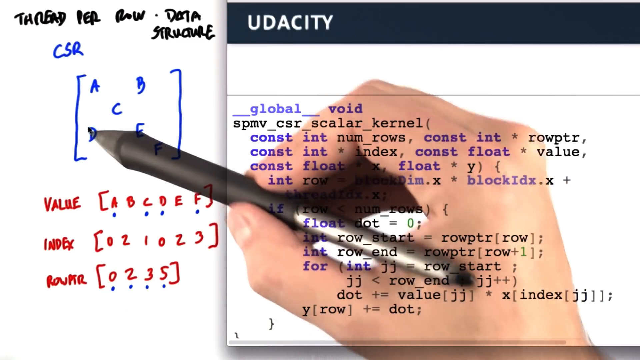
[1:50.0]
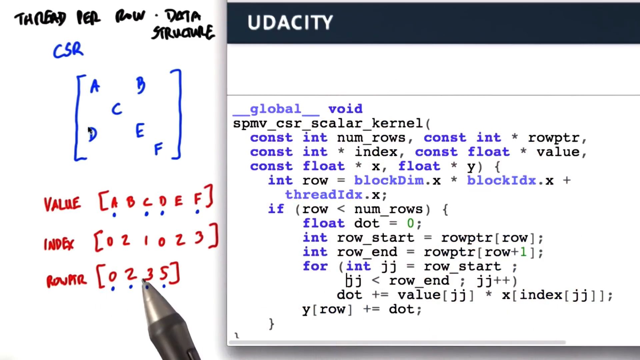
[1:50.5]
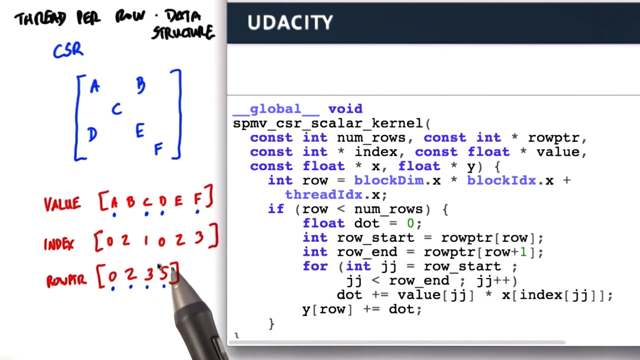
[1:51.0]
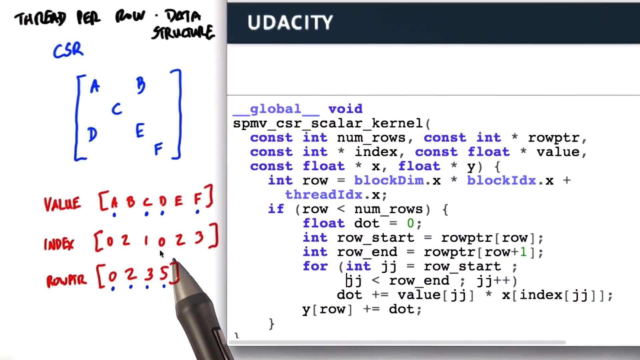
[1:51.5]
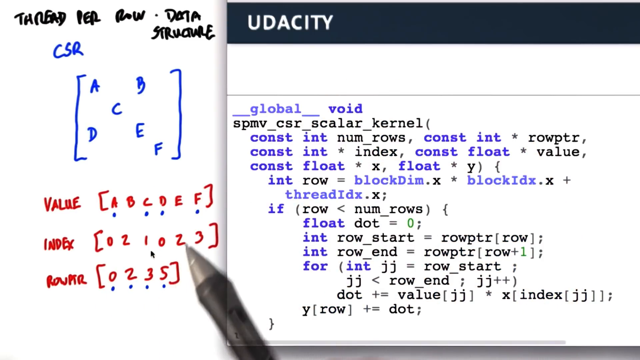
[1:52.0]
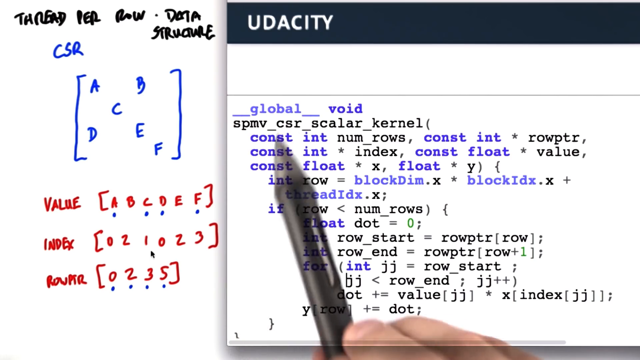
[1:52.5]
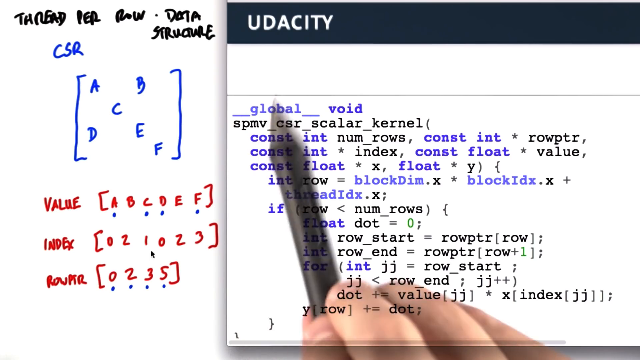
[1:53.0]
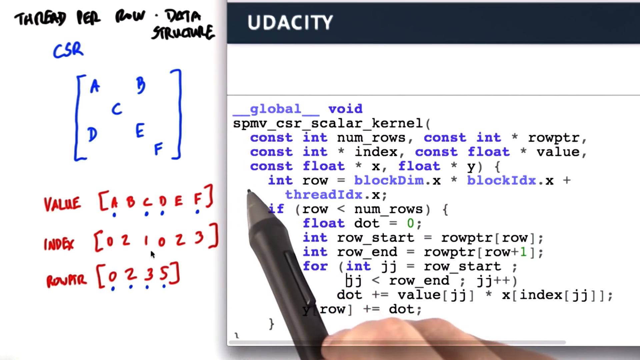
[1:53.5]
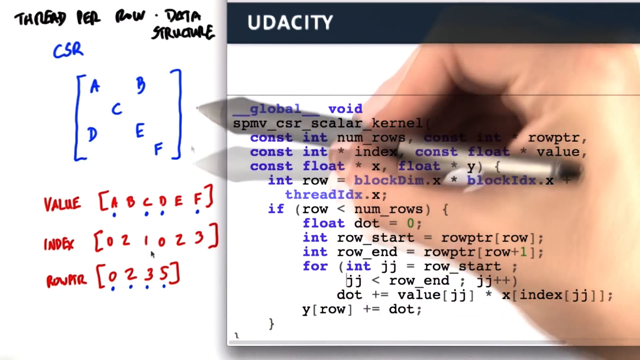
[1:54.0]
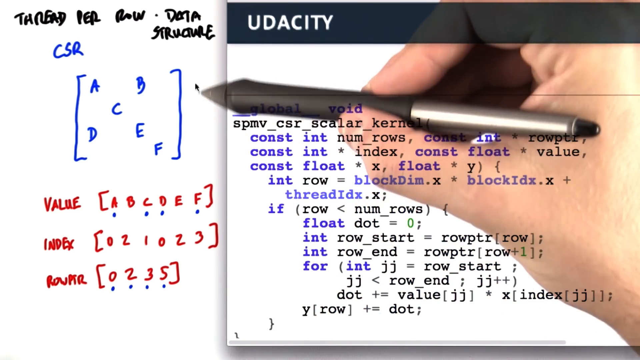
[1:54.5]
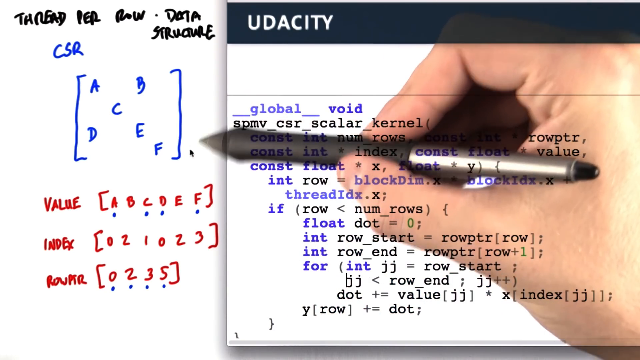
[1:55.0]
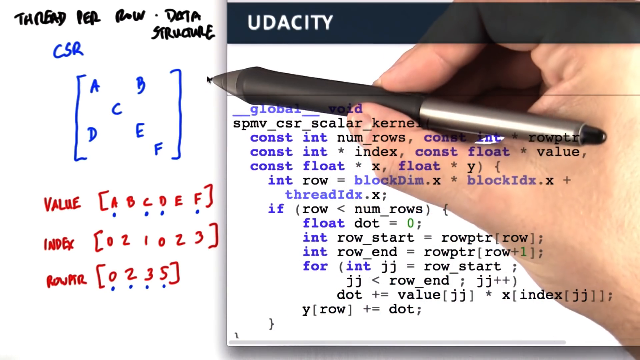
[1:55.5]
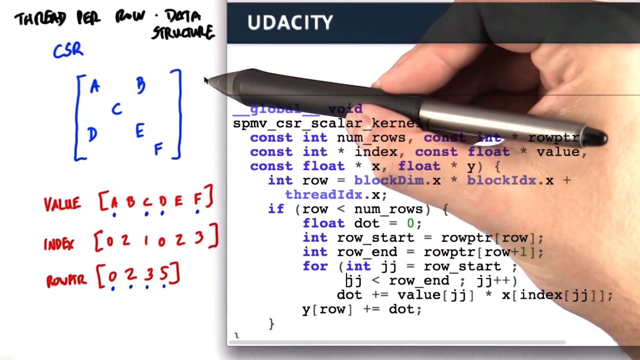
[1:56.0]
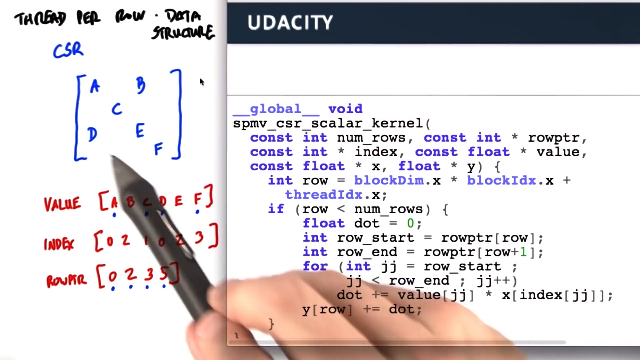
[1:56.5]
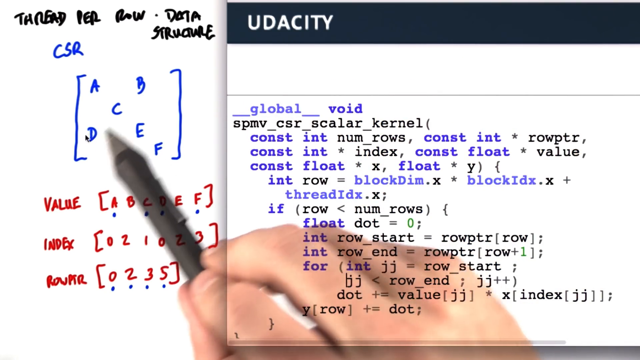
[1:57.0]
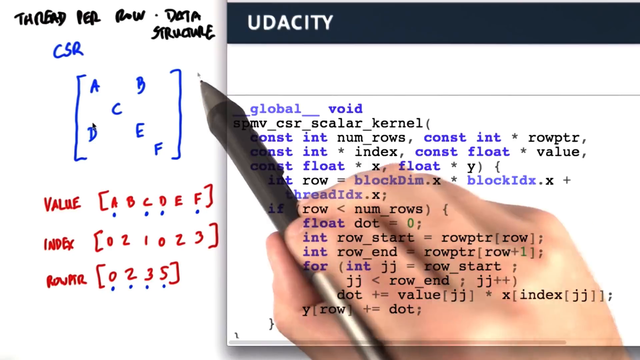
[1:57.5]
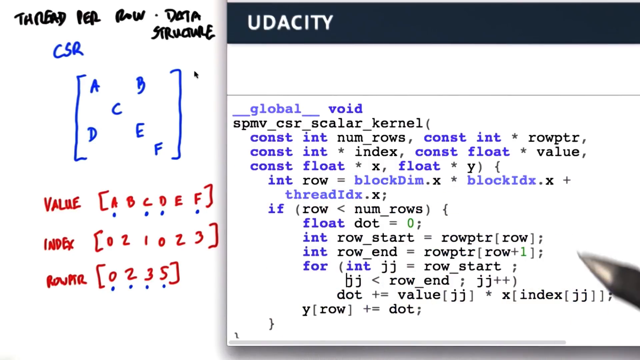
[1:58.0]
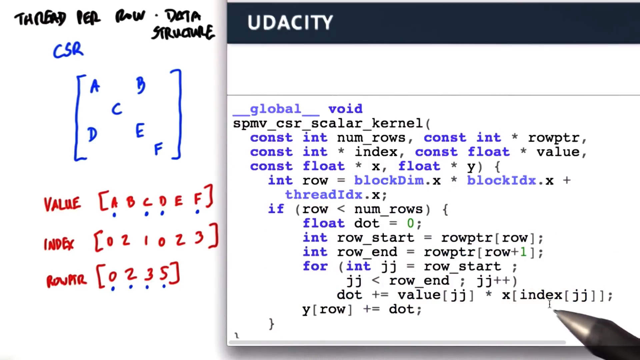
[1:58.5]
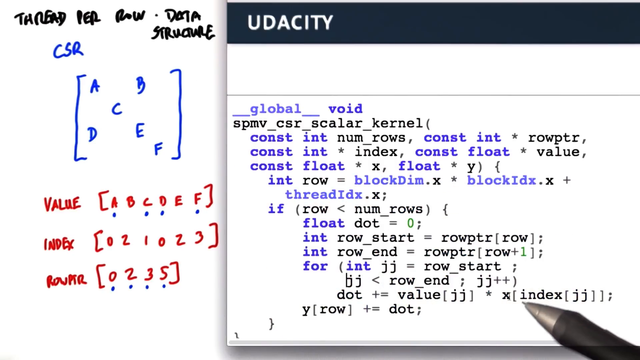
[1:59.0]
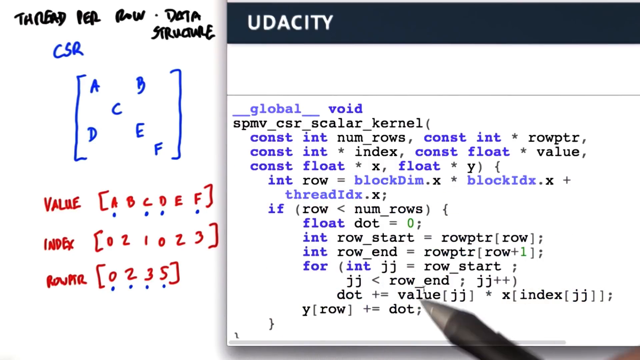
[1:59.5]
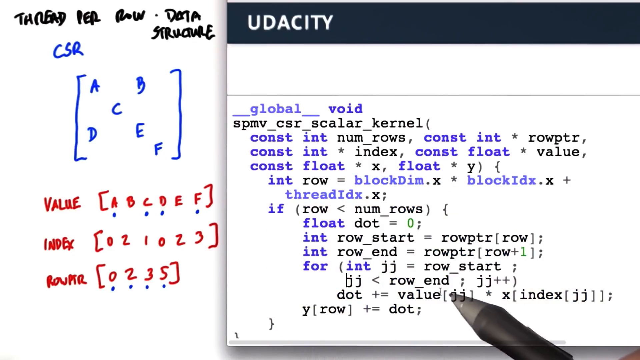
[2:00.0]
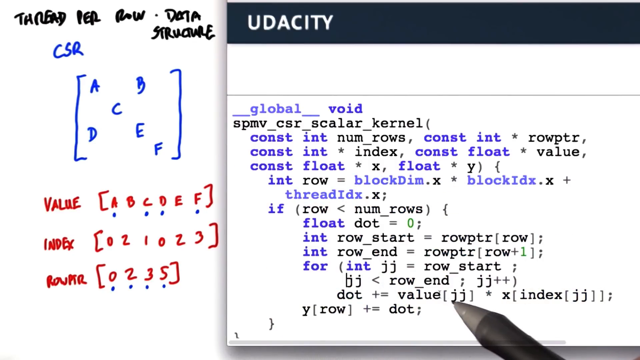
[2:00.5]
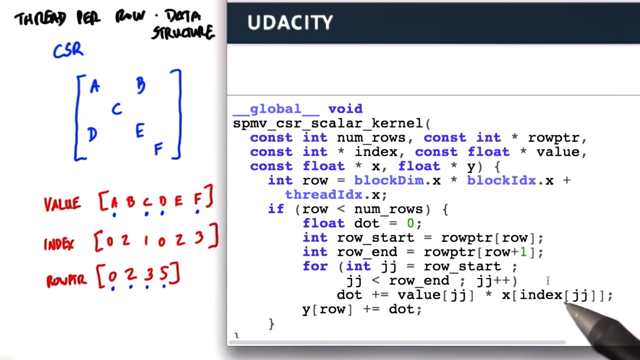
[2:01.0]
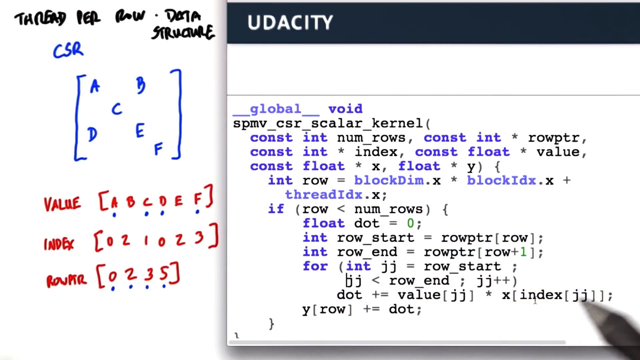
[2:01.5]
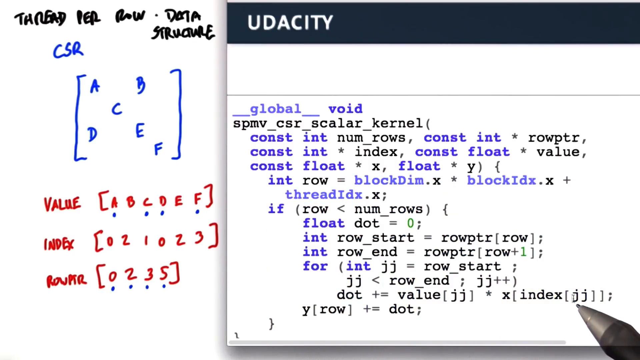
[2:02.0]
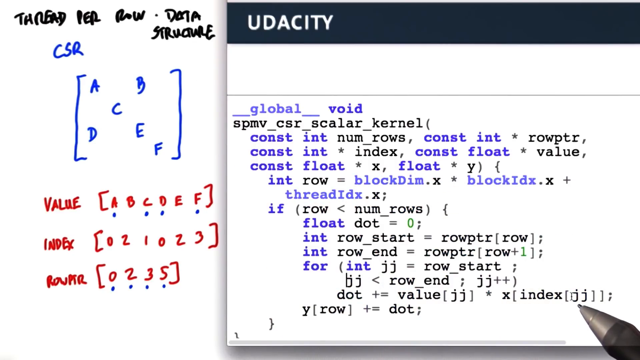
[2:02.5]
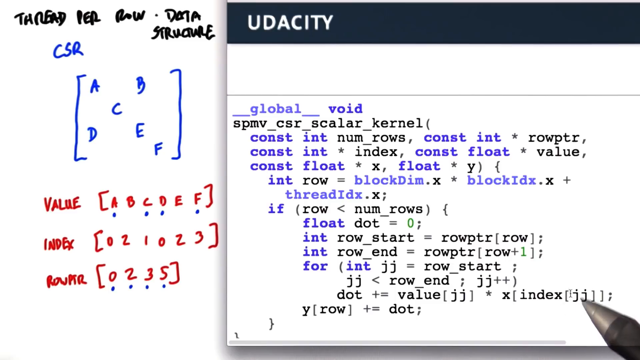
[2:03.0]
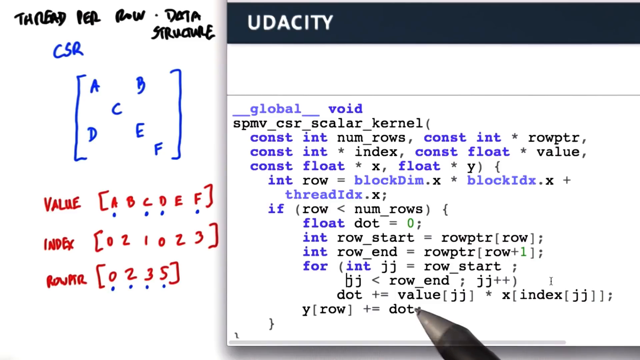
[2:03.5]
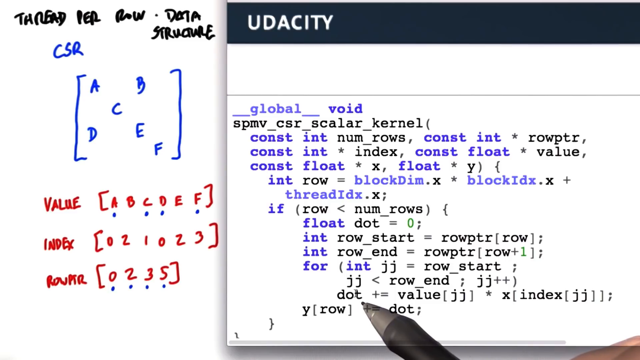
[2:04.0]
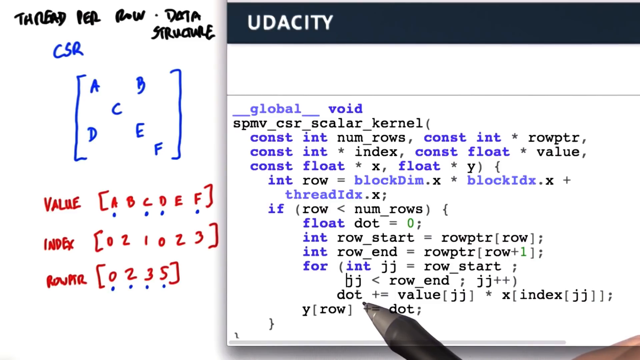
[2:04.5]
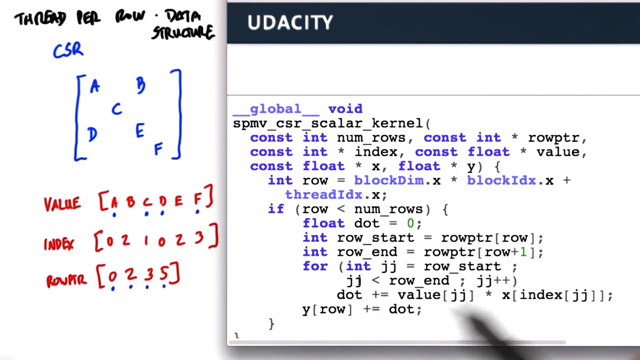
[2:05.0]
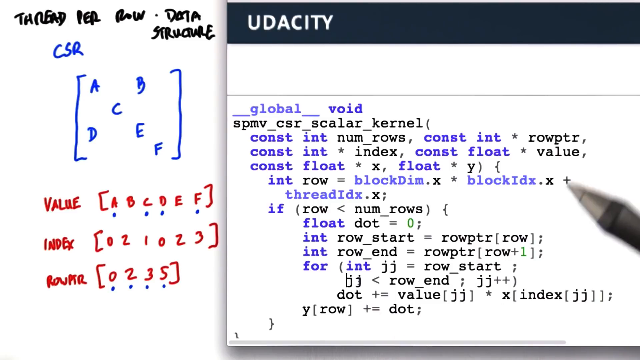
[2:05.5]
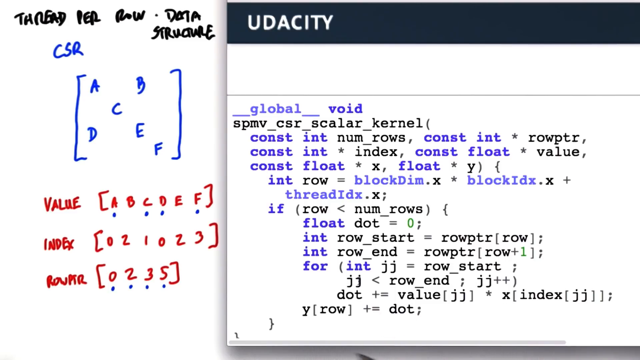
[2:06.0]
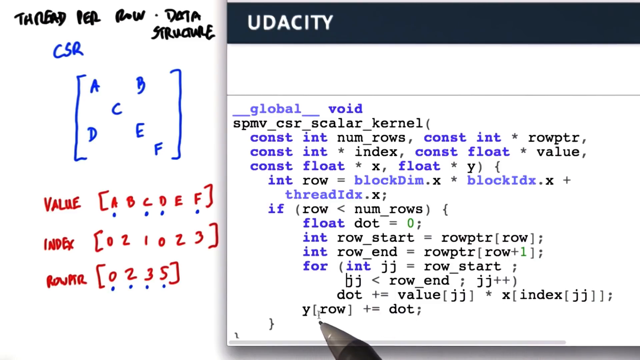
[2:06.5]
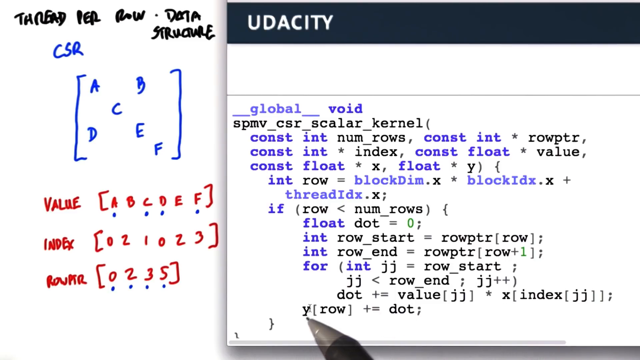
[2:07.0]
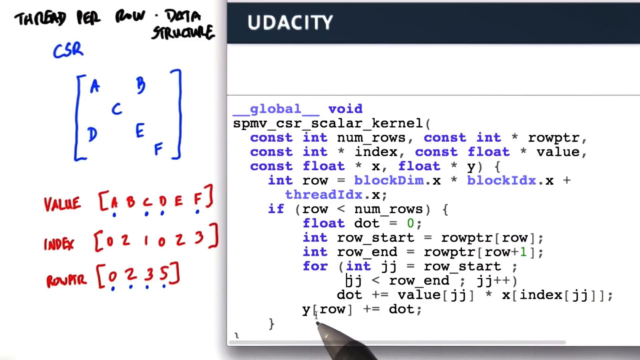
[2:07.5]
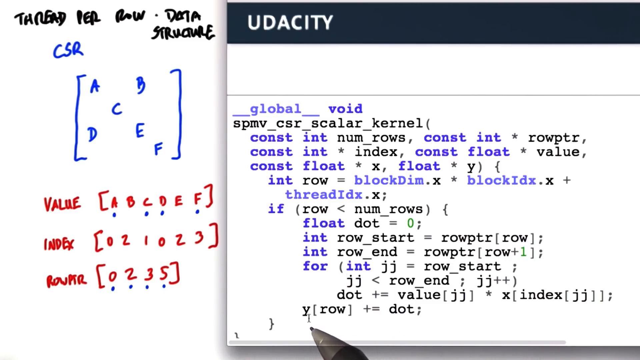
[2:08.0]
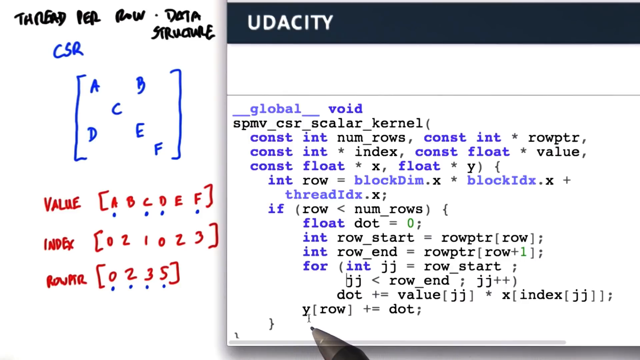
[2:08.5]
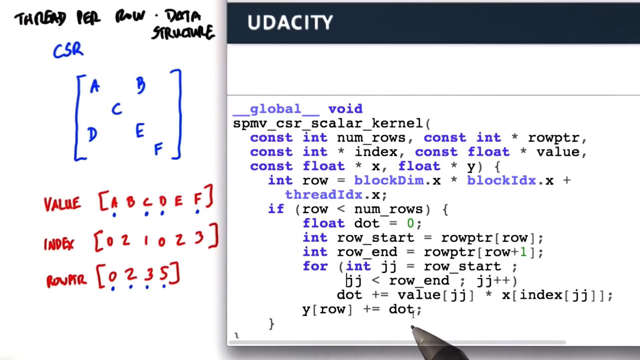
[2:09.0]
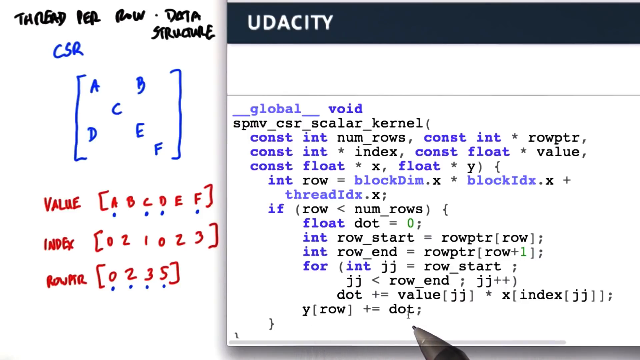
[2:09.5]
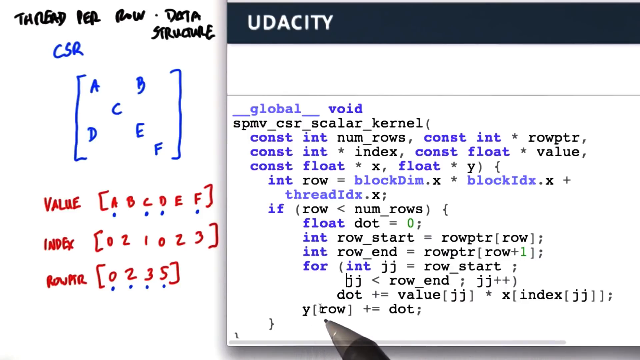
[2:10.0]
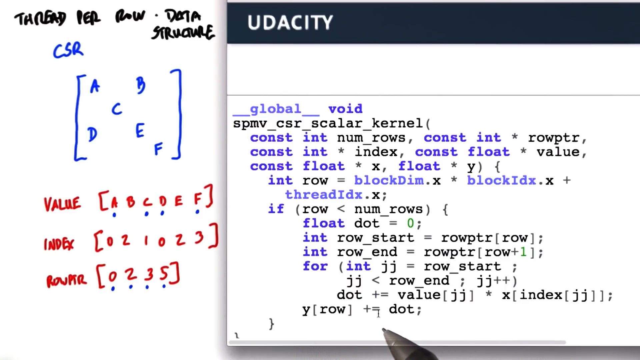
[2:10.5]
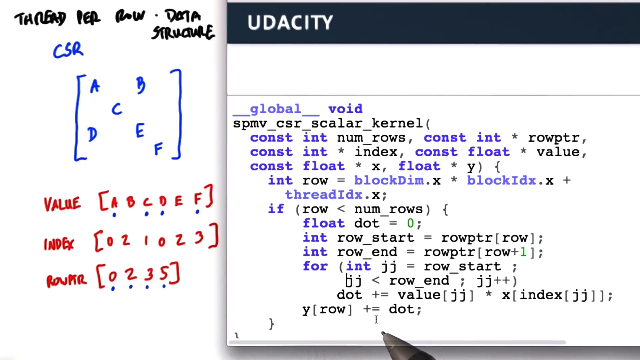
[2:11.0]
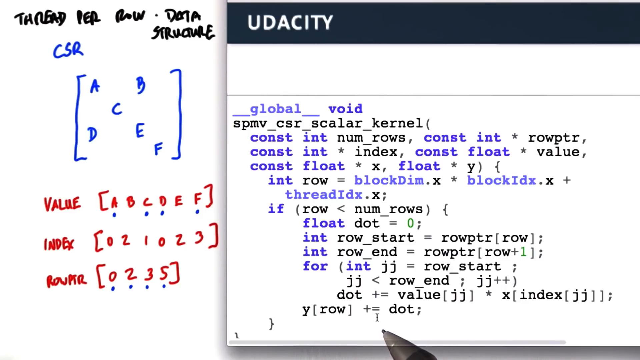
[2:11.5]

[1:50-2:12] The pen hovers over the letter D in the CSR brackets, with the whole hand visible; the hand has held the pen the same way since the beginning. The pen goes down to the number 5 in the bottom row, over the bracket next to the 5, moves up a line, then goes up and down over the Udacity code toward the top a few times. It goes back over to the left side of the screen to the CSR bracket, moves up and down there, and hovers over the D. The pen briefly touches underneath the word "structure" next to the end bracket on CSR, then goes back over to the code and hits the third line up from the bottom, under the word "index" near the bottom right corner. It goes up and down several times there, moves slightly left to the word "value", and makes clockwise circles with the tip. He goes back to the word "index", where the pen touches the screen or paper, swirls the pen in small circles over "index", and lands underneath the "js" in the code. He moves the pen to the word "dot", then to the third row from the top of the code, where it briefly settles before going back down to the bottom and disappearing. It then comes back and circles the word "row" on the bottom line of the code.